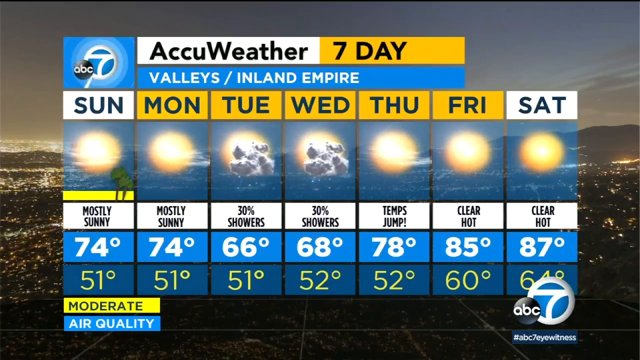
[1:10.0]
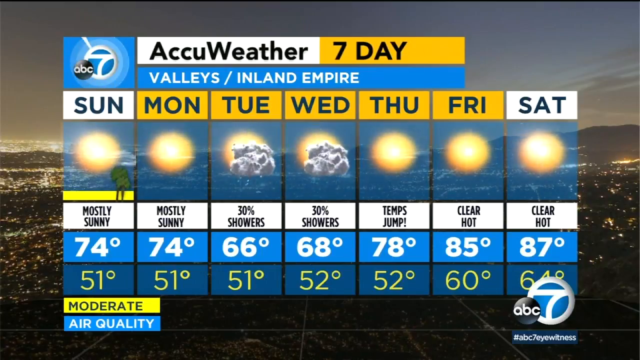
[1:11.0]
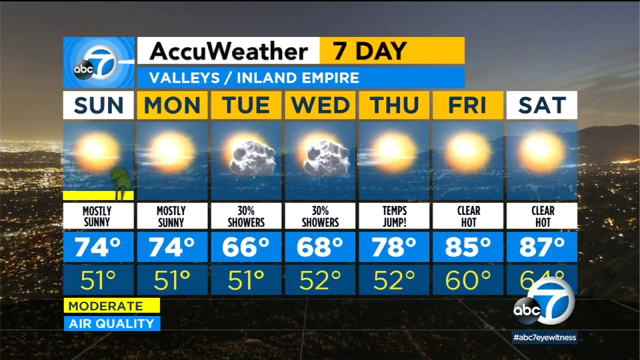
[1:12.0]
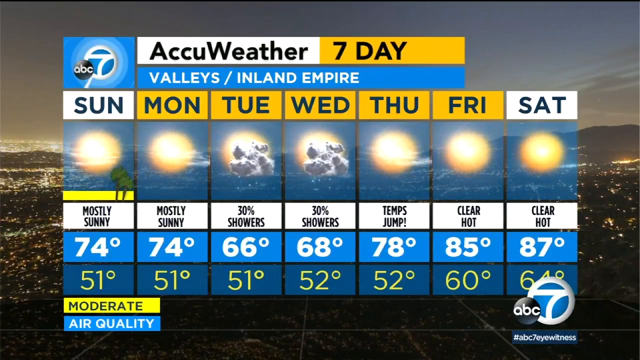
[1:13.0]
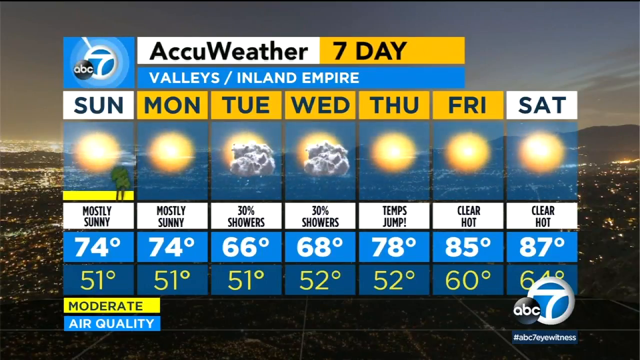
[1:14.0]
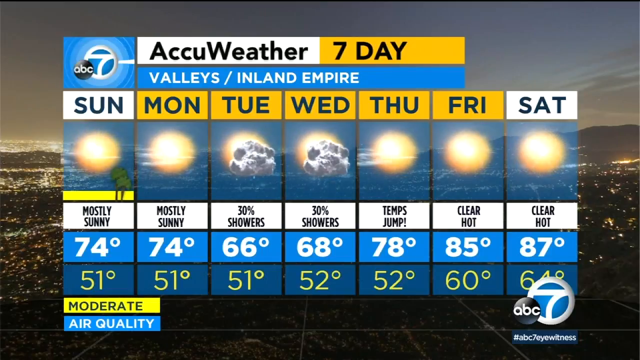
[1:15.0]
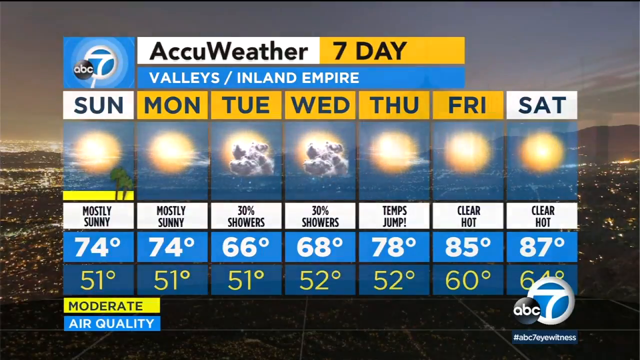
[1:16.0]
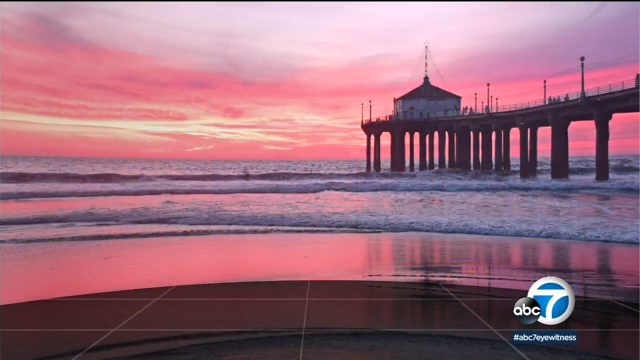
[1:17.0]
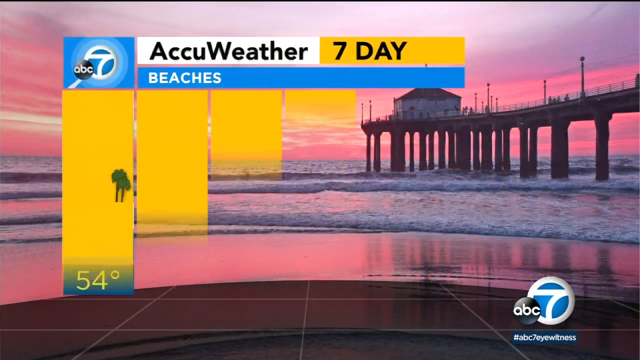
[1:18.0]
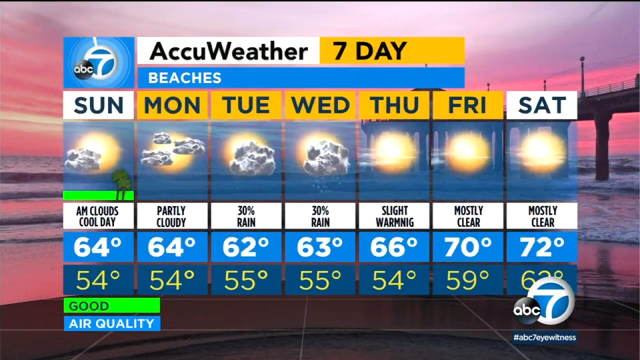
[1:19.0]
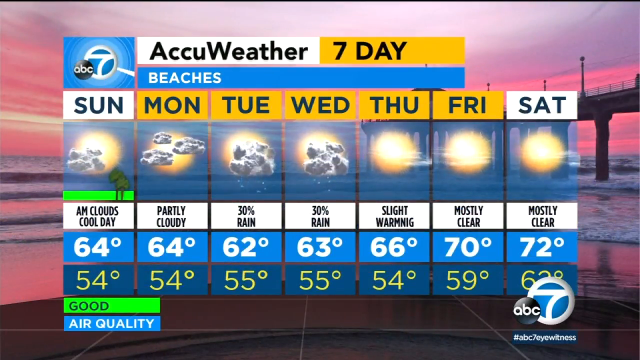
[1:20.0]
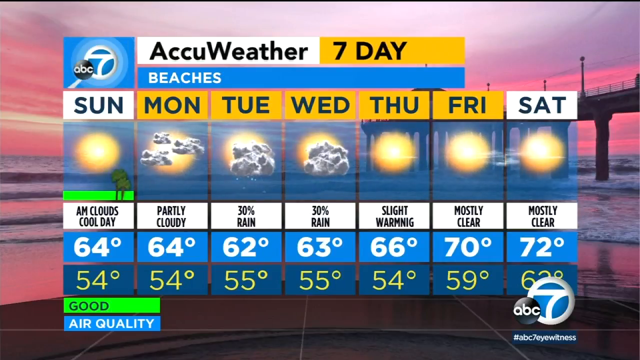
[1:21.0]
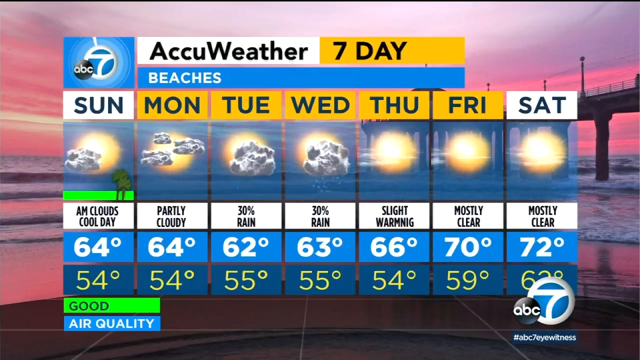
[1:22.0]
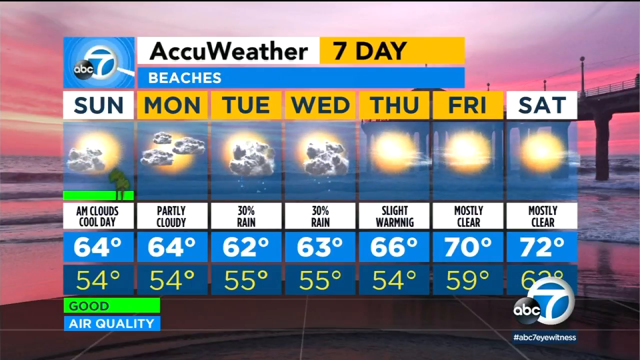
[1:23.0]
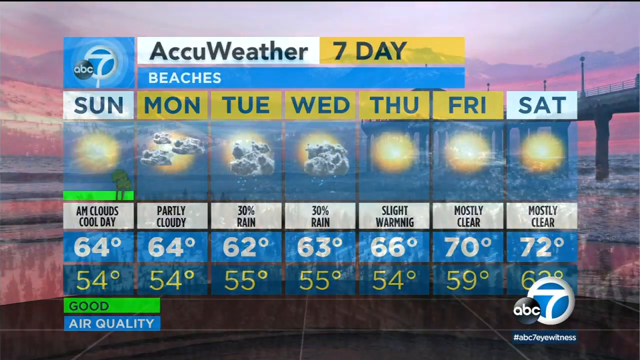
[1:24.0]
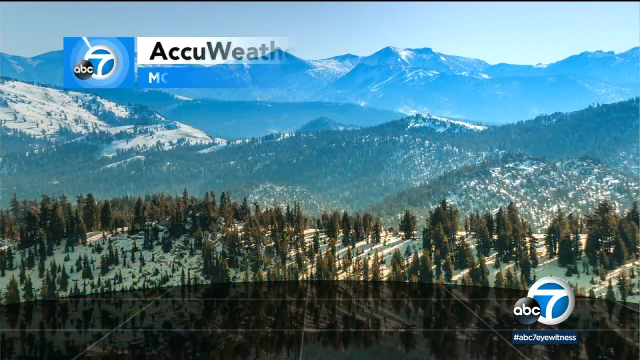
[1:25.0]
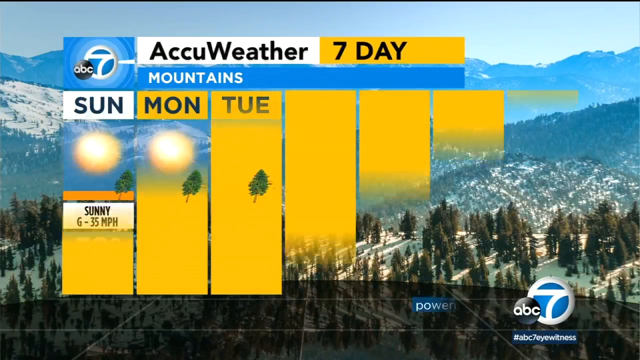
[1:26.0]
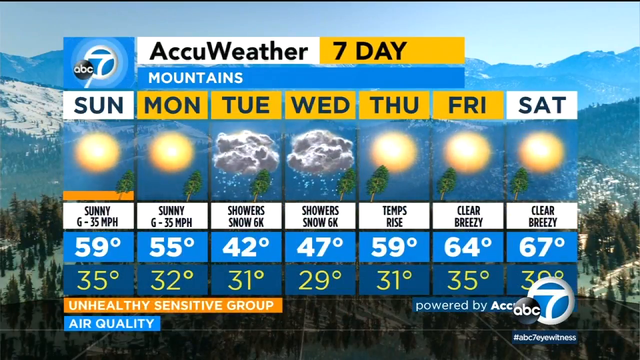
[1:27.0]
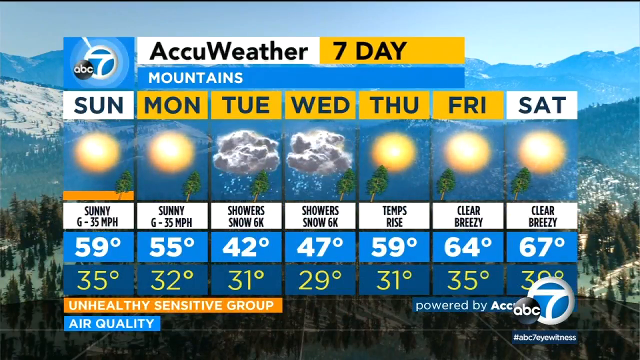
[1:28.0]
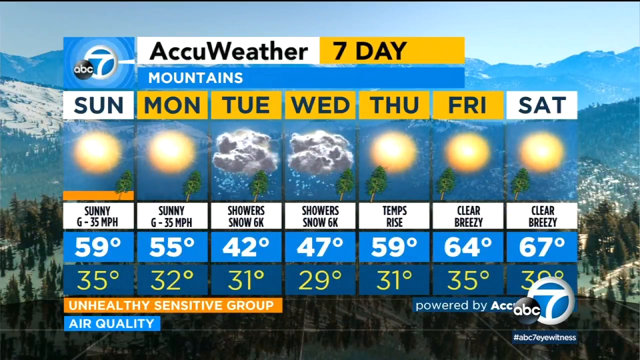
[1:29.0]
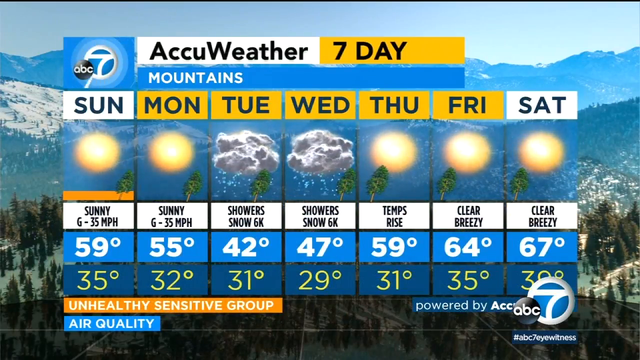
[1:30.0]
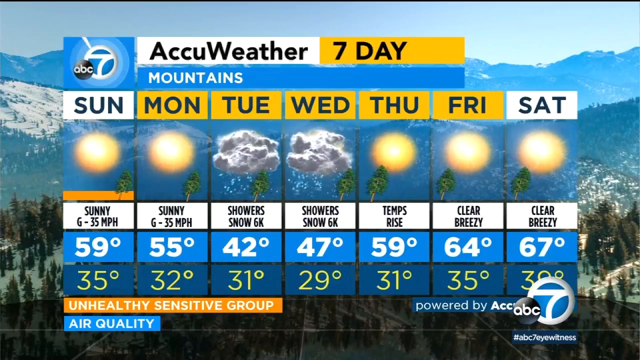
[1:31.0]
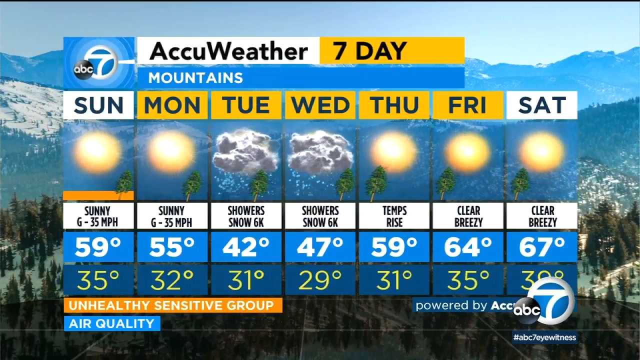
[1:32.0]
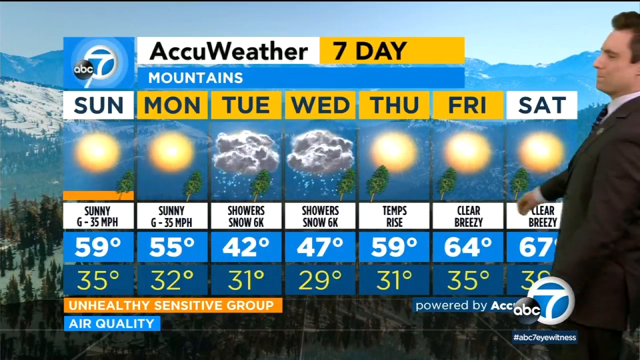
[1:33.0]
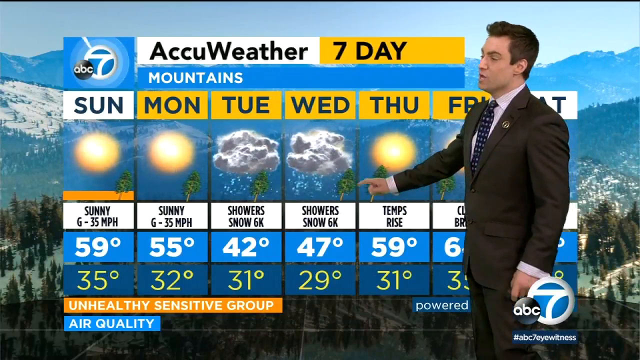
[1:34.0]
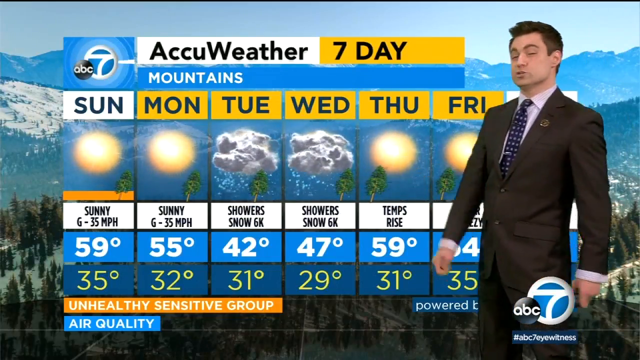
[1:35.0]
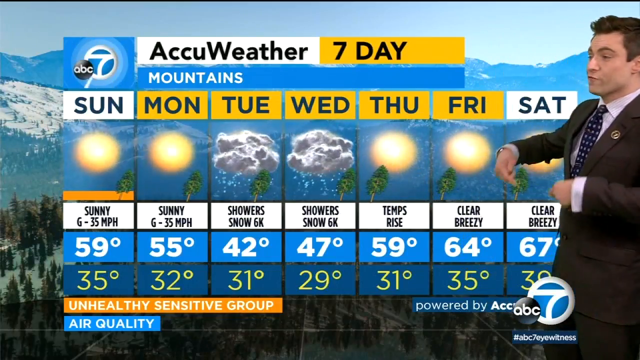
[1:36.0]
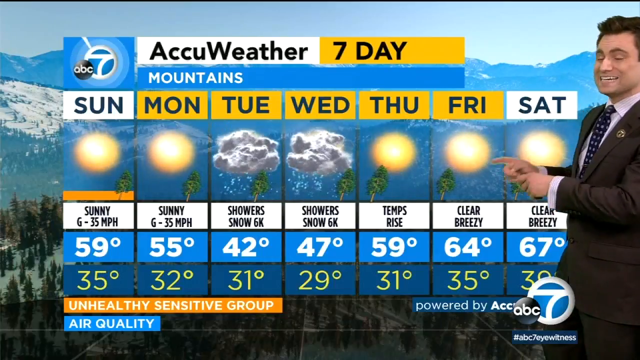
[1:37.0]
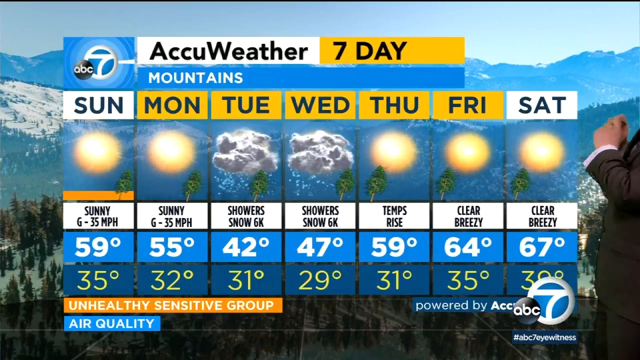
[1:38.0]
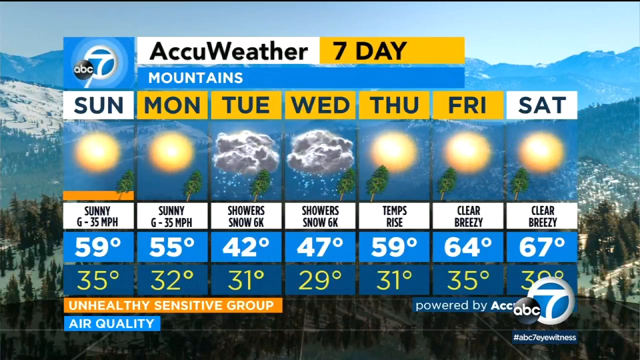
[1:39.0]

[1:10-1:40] The AccuWeather seven-day forecast for the valleys and Inland Empire shows mostly sunny Sunday and Monday, 30% showers Tuesday and Wednesday, a temperature jump Thursday, and clearing out Friday and Saturday, with temperatures of 74, 66, 68, 78, 85 and 87 degrees. A beaches forecast follows: AM clouds and cool Sunday, partly cloudy Monday, 30% rain Tuesday, and mostly clear Friday and Saturday, with an air quality rating also shown. Next is an AccuWeather seven-day forecast for the mountains: sunny with 35 mph on Sunday and Monday, showers and snow Tuesday and Wednesday, a temperature rise Thursday, and clear and breezy Friday and Saturday. Air quality powered by ABC is shown with "sensitive group". Jonathan then appears on the stage making gestures as he presents the AccuWeather forecast.